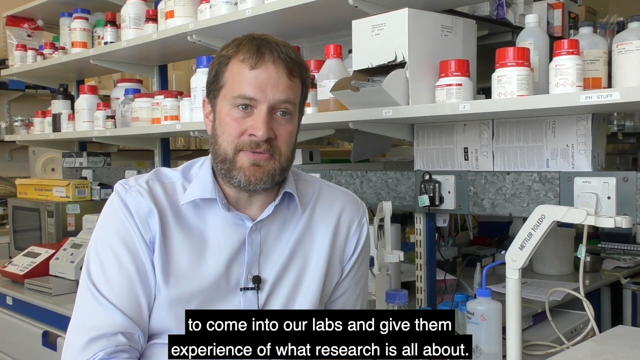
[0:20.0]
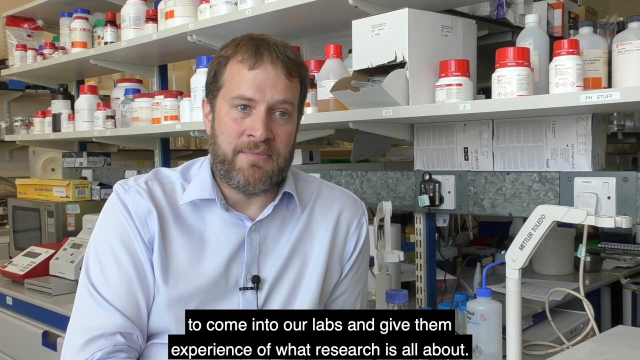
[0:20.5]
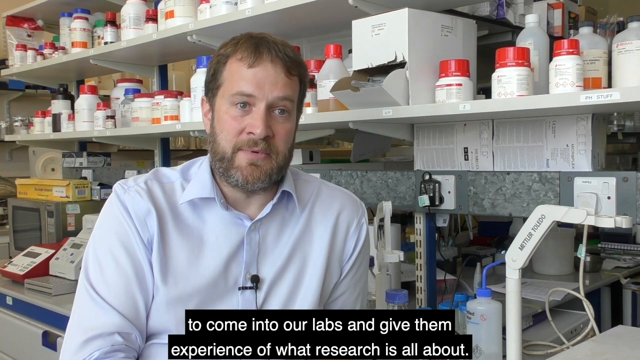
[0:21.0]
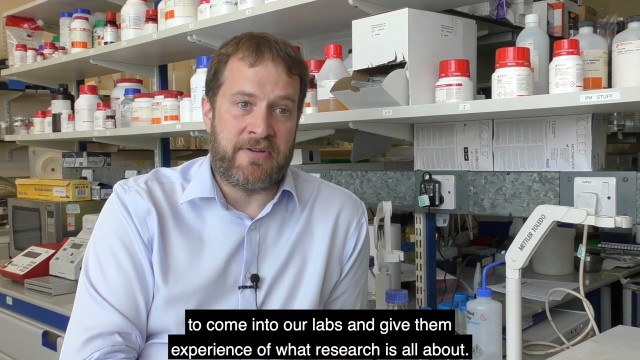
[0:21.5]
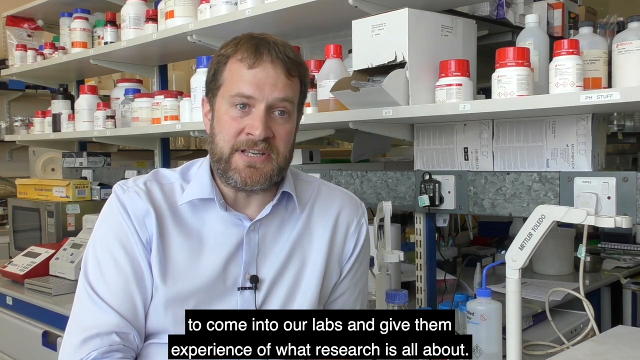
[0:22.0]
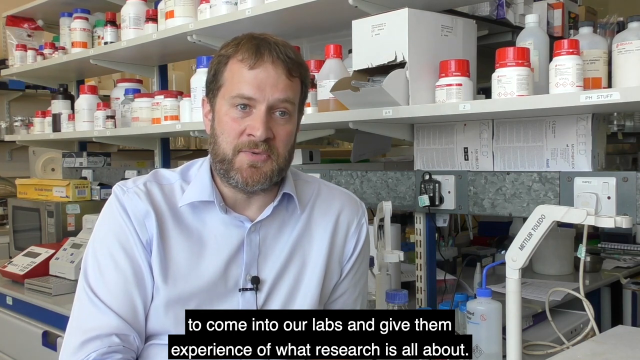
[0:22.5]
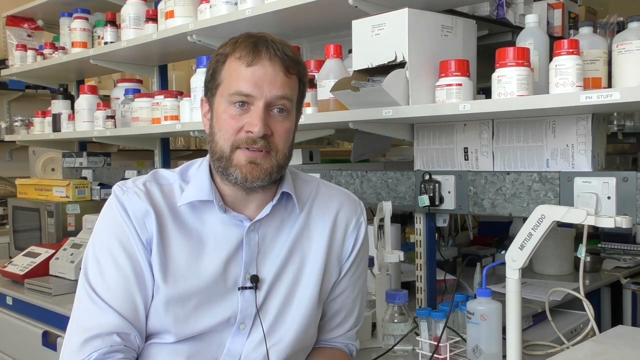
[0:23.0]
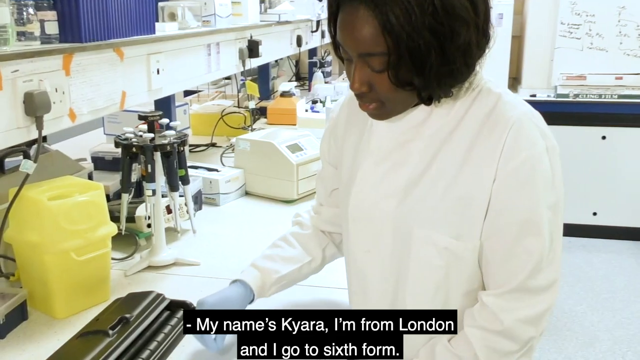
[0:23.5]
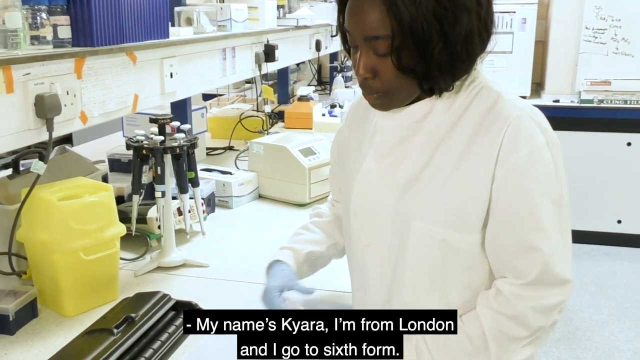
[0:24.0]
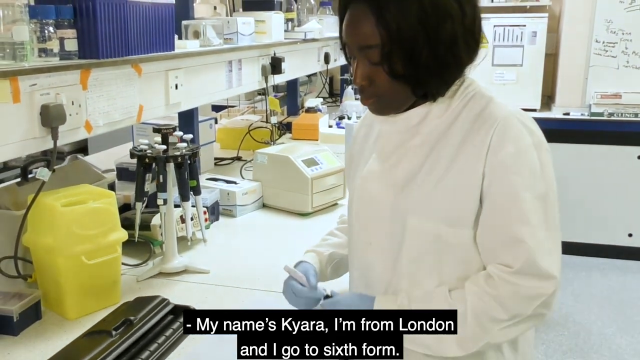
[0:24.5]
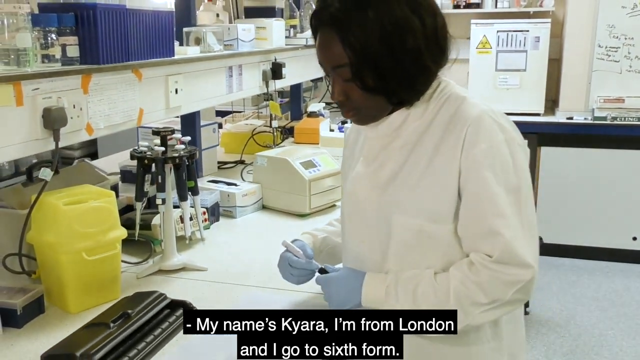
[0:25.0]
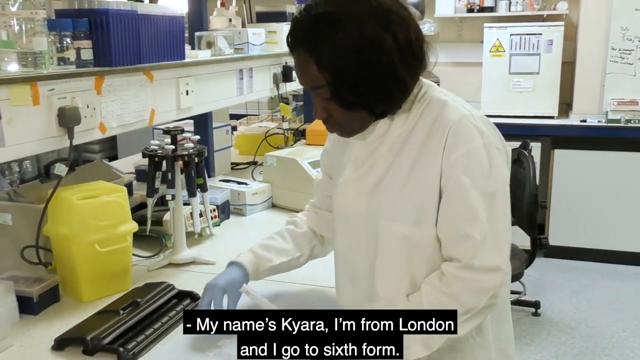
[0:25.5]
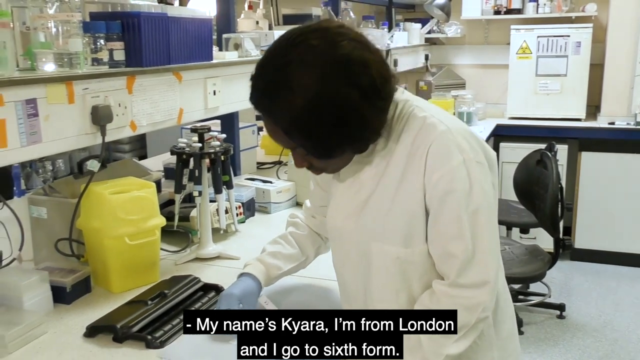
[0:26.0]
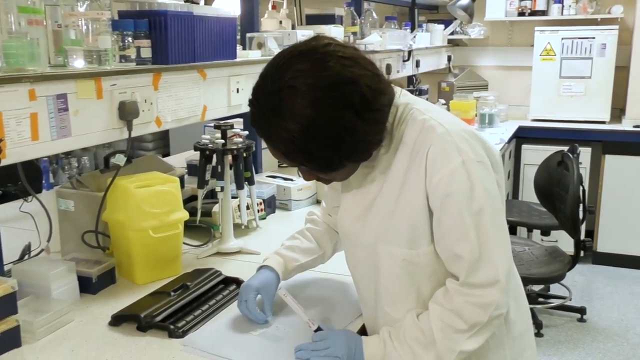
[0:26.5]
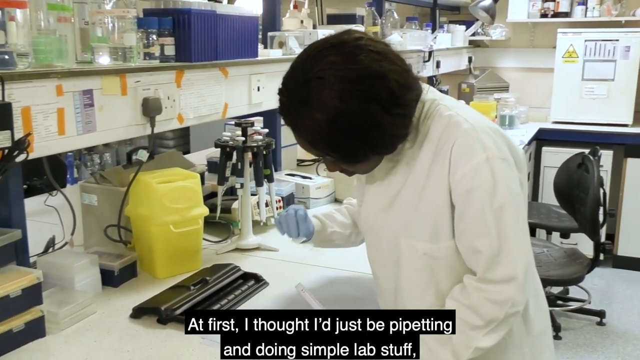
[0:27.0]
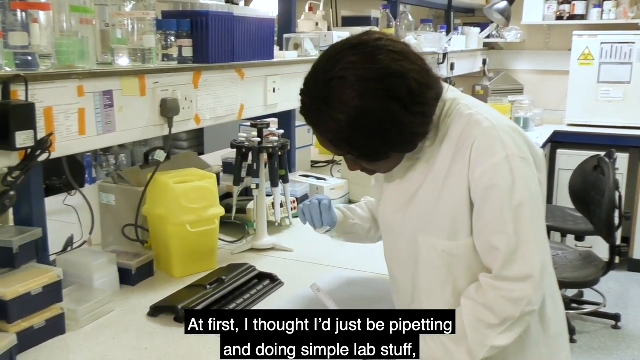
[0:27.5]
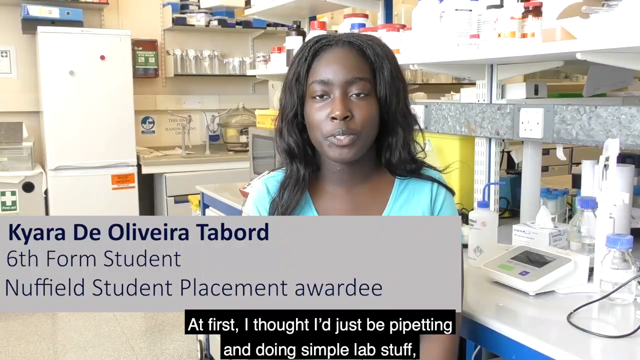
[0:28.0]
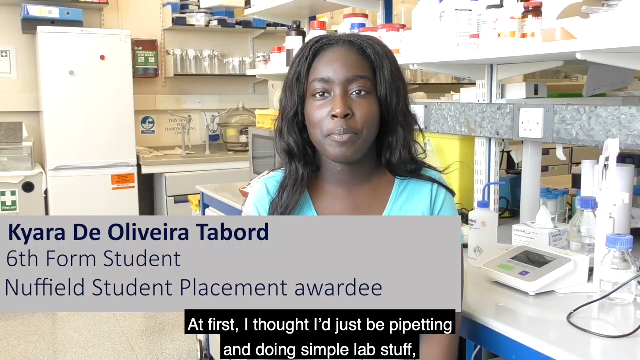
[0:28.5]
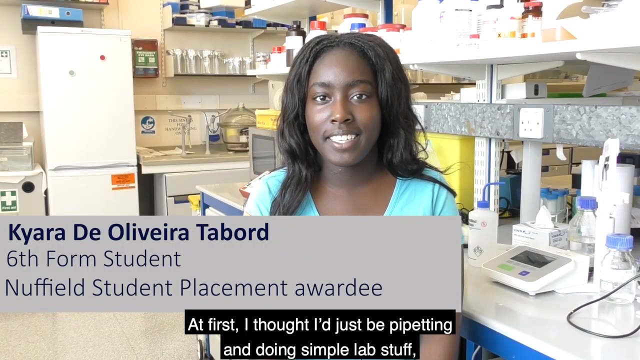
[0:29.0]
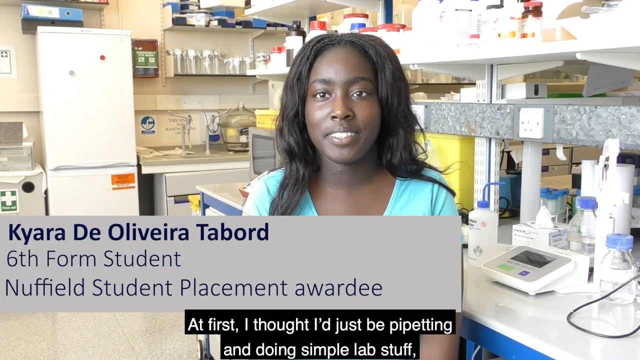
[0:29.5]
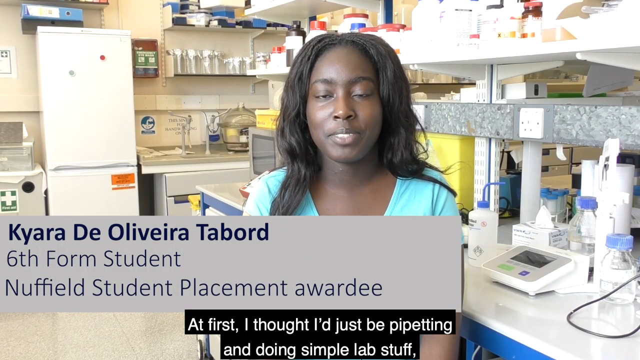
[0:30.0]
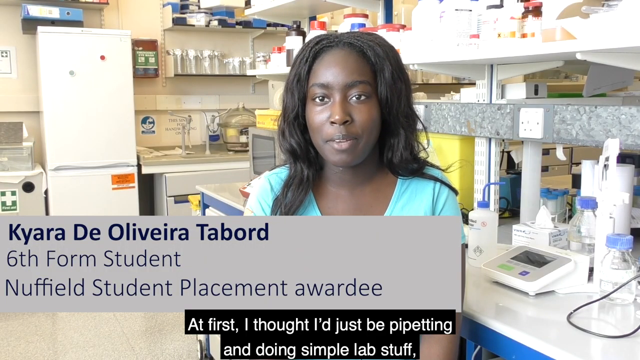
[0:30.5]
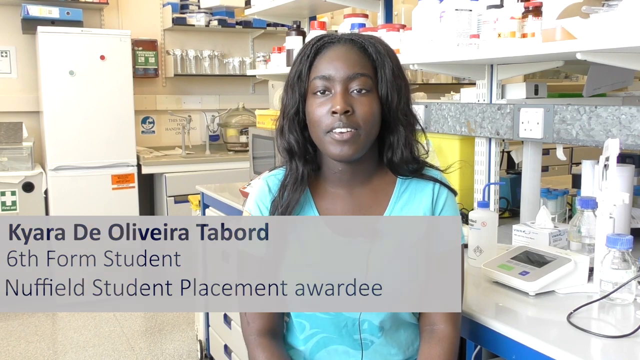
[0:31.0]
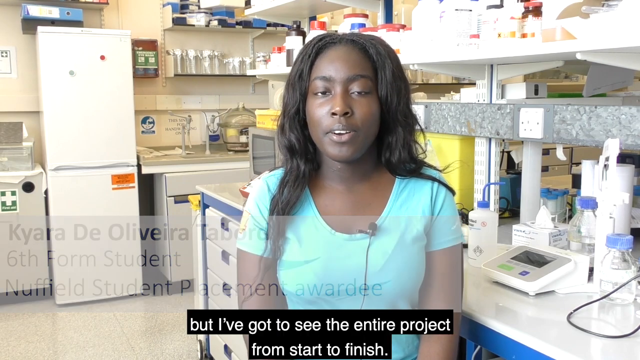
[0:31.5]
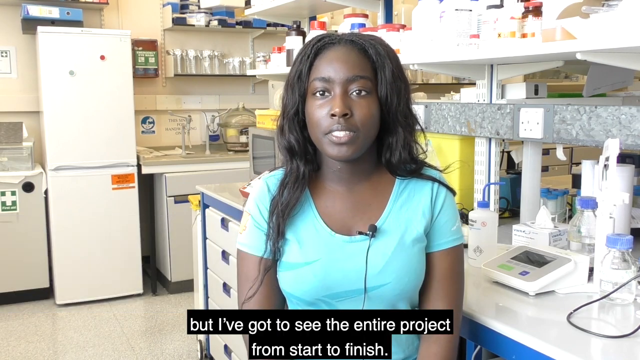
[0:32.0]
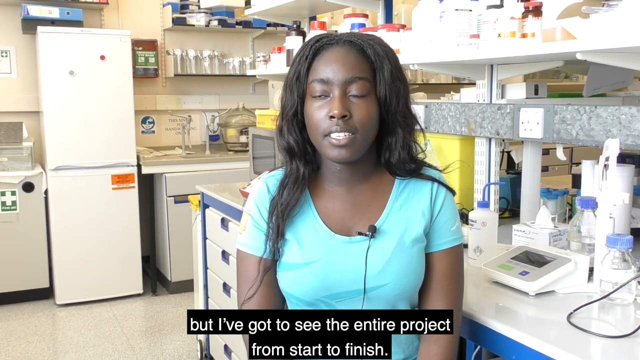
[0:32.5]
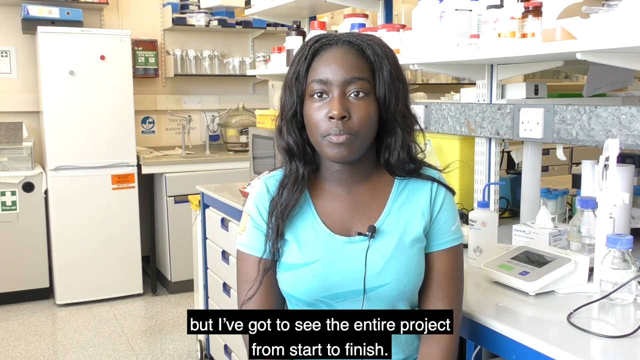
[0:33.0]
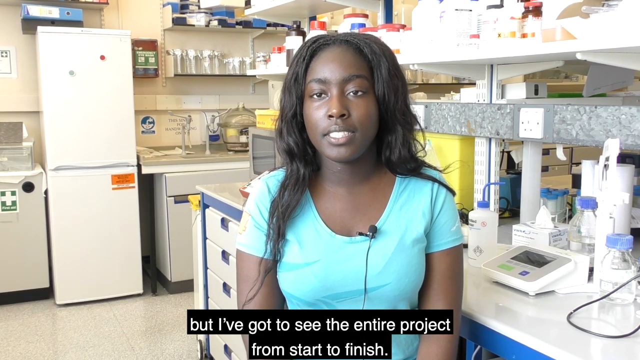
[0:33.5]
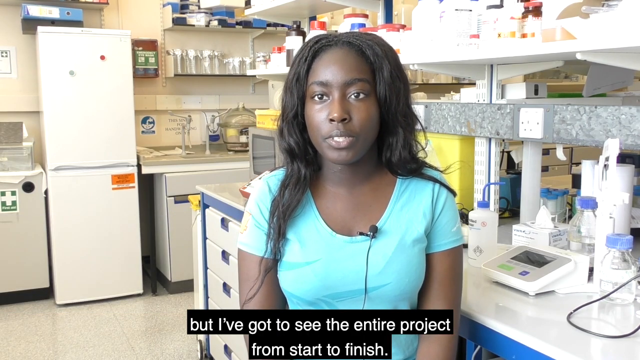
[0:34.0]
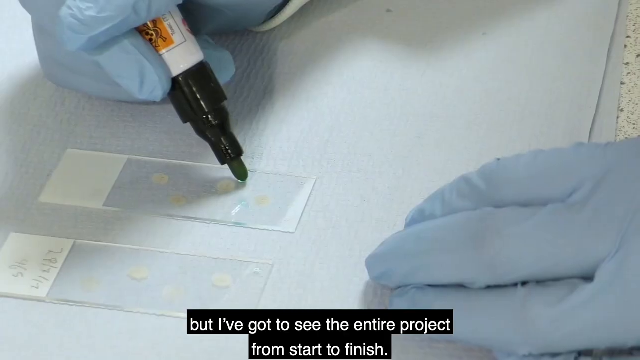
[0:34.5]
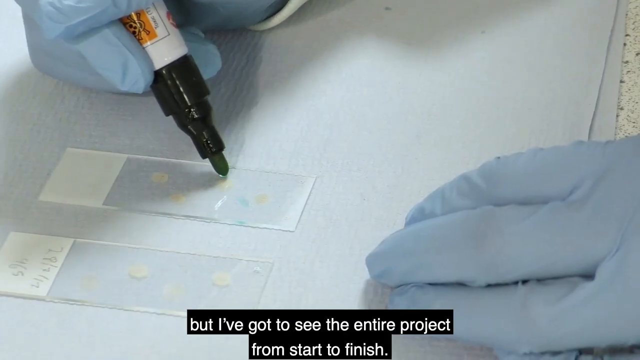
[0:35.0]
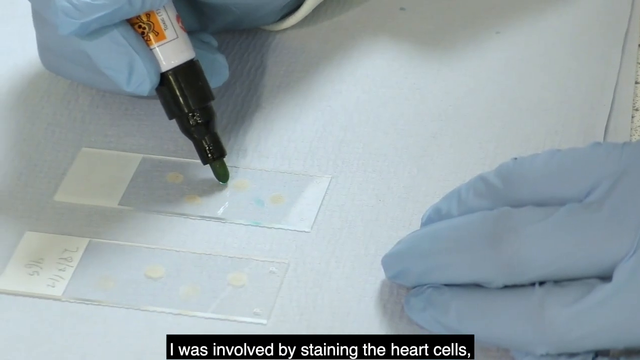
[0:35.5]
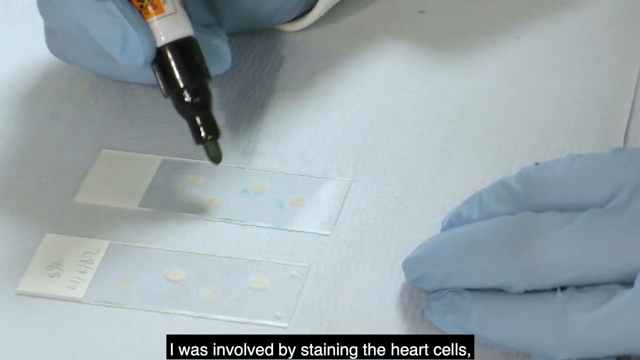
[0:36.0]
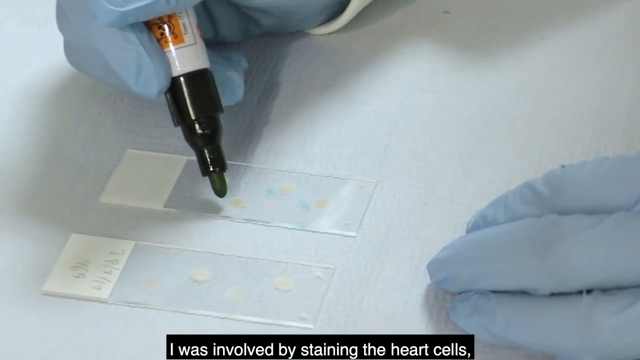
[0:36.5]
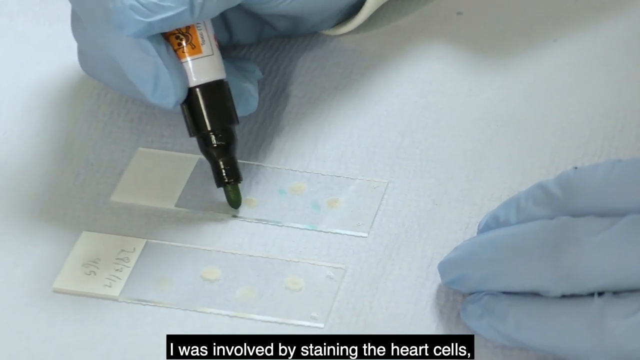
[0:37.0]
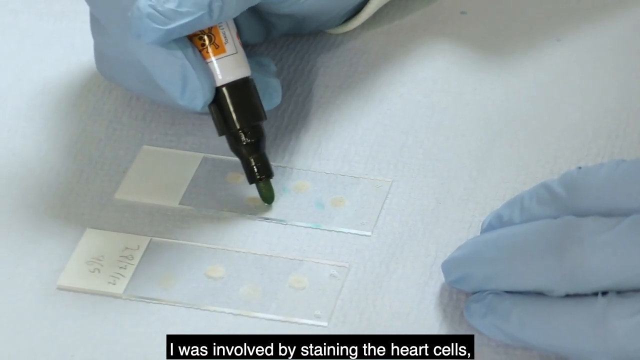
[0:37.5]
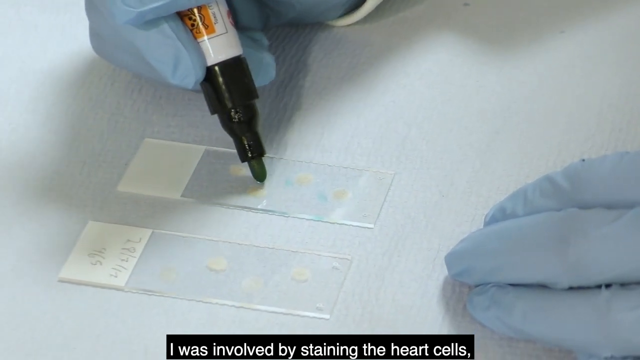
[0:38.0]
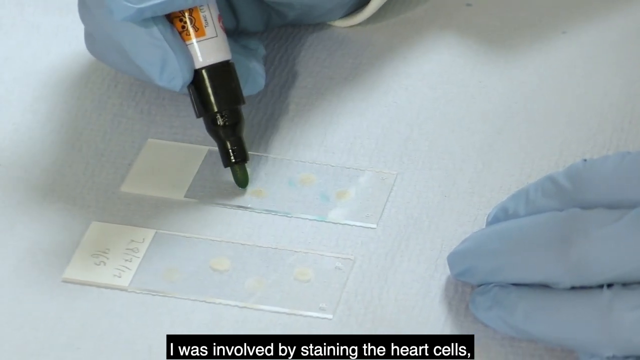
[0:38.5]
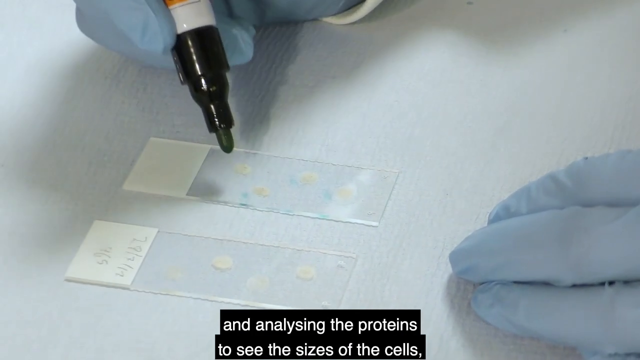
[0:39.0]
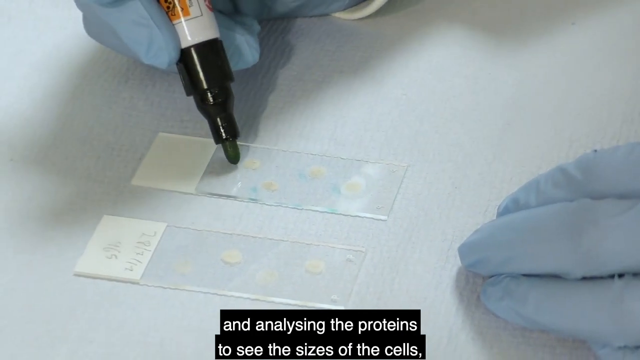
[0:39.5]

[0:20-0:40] James talks to someone behind the camera, then the focus shifts to the Black woman. She is dark-skinned, wears extensions or a wig reaching about her chest, and a teal blue fitted t-shirt. When she is first shown, she wears a white lab coat and is doing something with small microscope slides. The video then cuts to her sitting down and talking to someone behind the camera. Her background is similar to James's, but the camera seems shifted slightly: behind her is a white refrigerator that seems fairly tall, with the refrigerator section at the top and the freezer at the bottom, along with the same shelves of medicine seen with James.